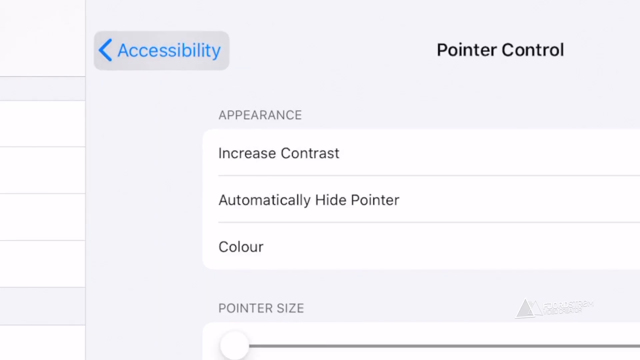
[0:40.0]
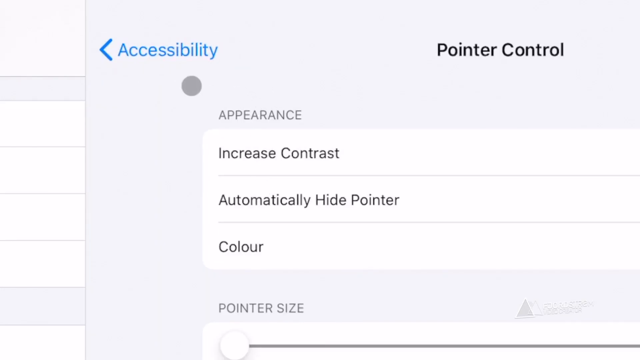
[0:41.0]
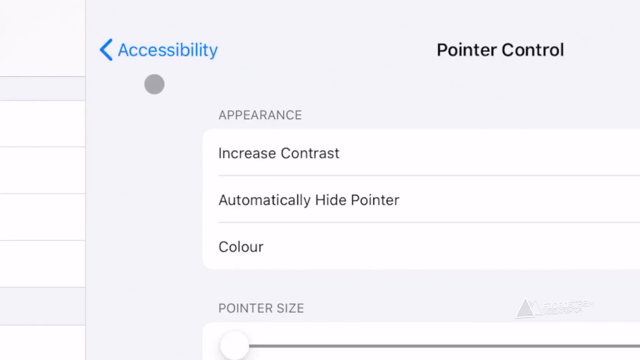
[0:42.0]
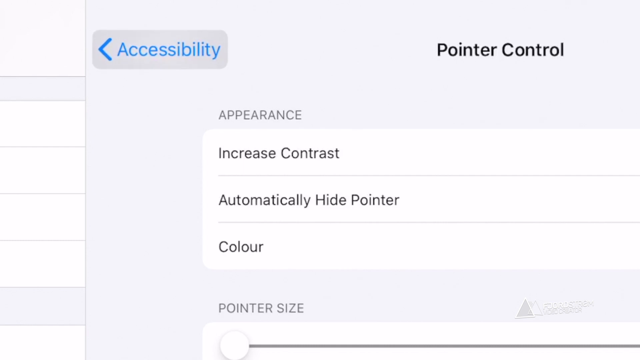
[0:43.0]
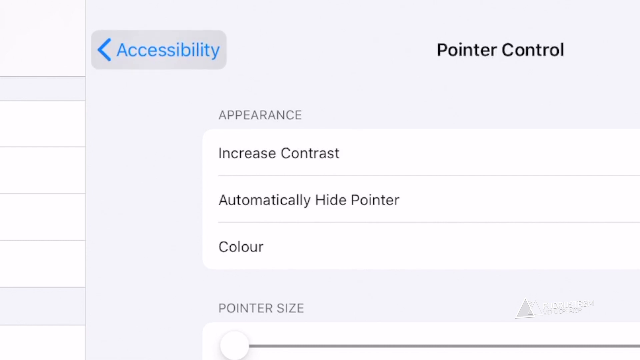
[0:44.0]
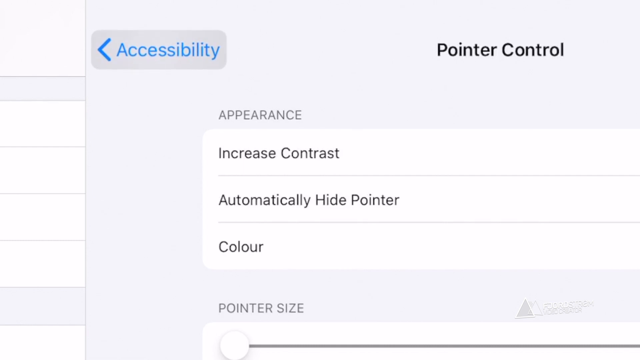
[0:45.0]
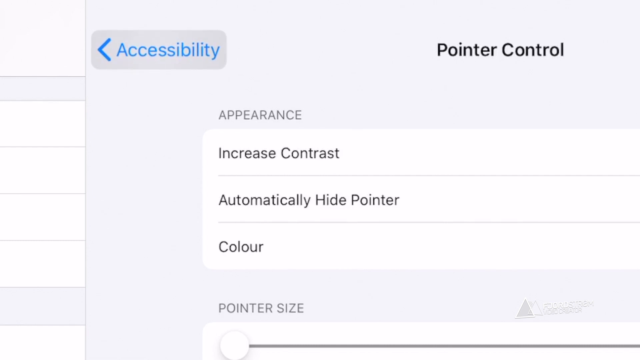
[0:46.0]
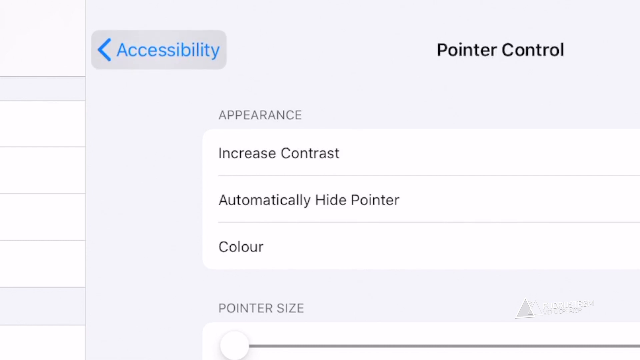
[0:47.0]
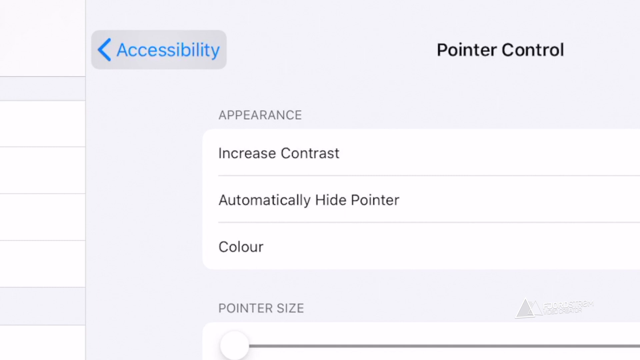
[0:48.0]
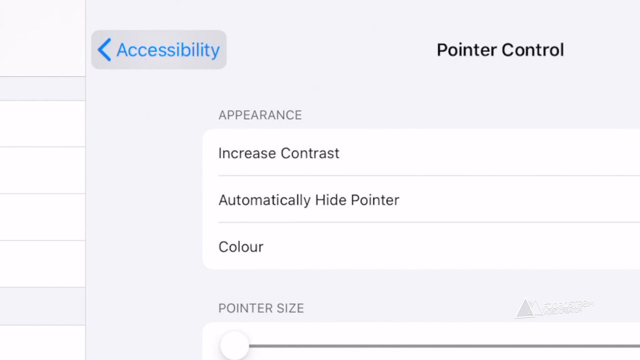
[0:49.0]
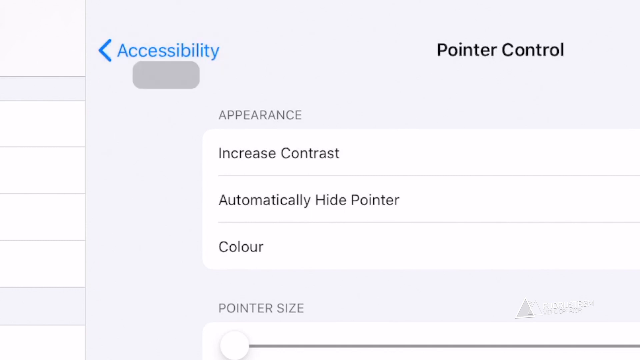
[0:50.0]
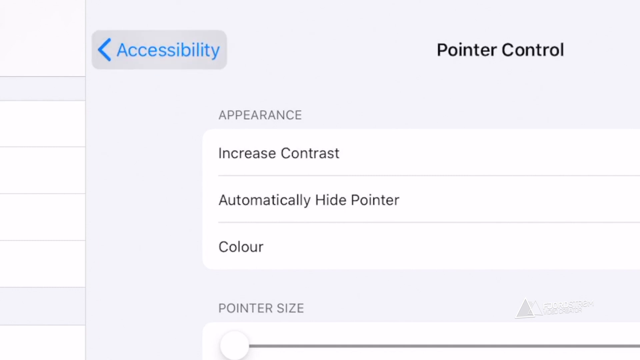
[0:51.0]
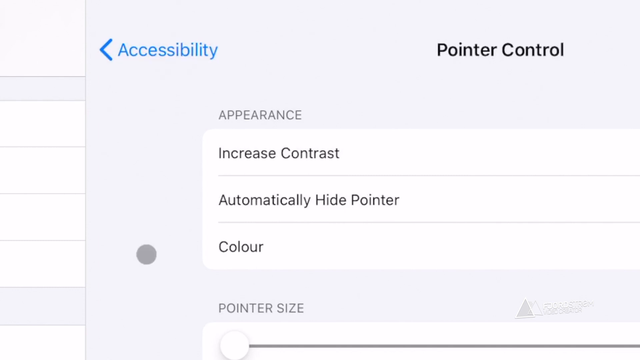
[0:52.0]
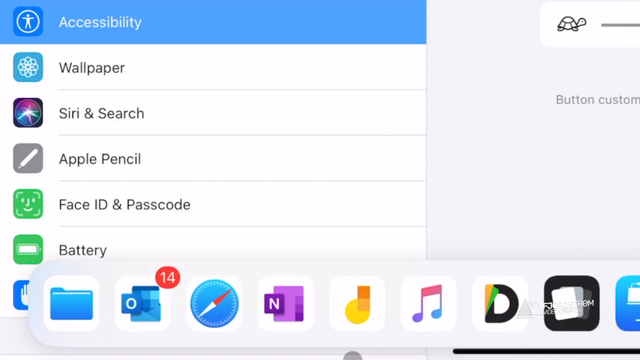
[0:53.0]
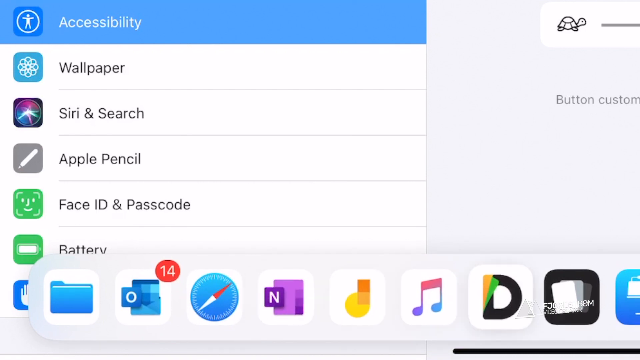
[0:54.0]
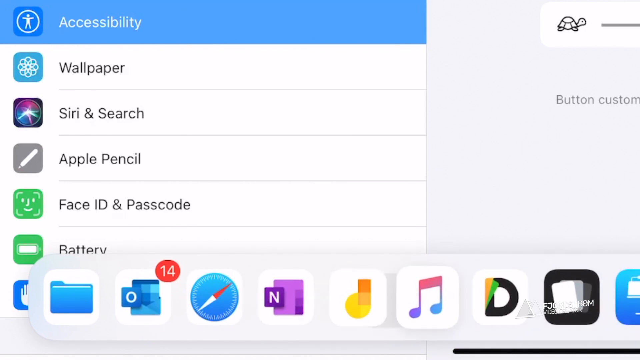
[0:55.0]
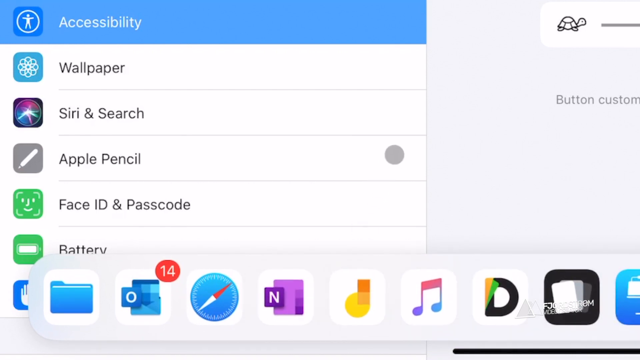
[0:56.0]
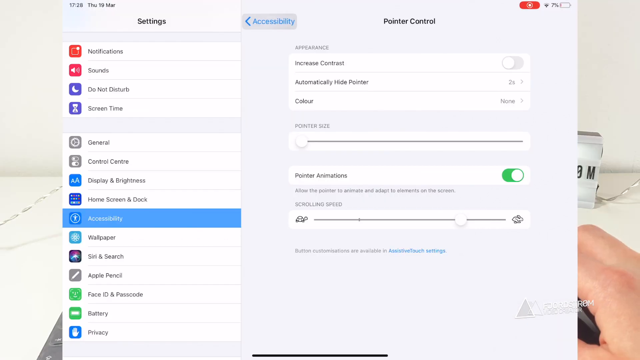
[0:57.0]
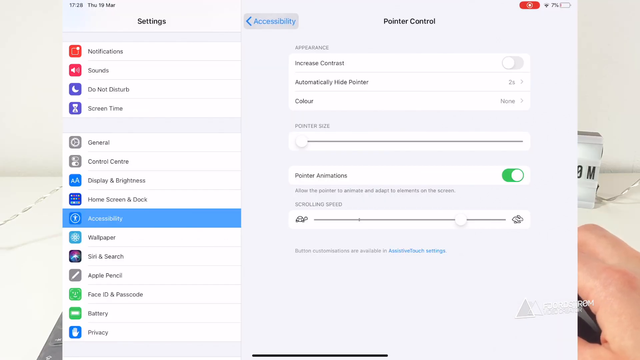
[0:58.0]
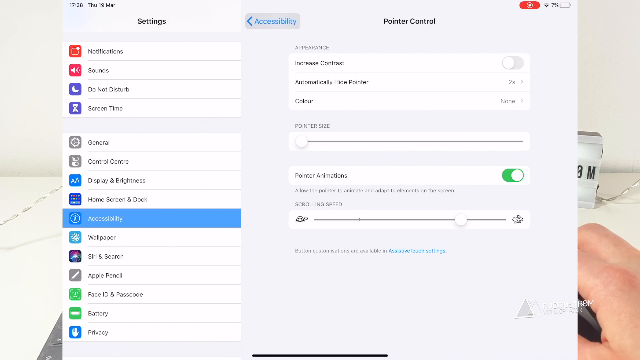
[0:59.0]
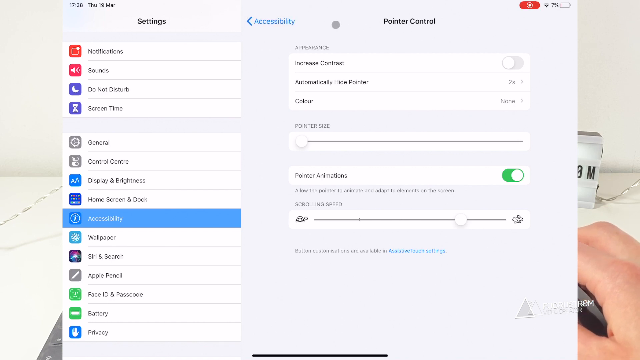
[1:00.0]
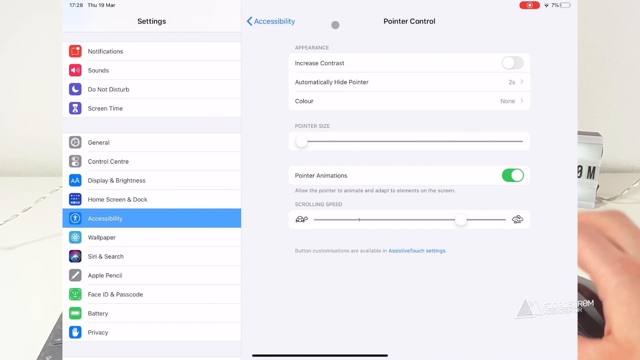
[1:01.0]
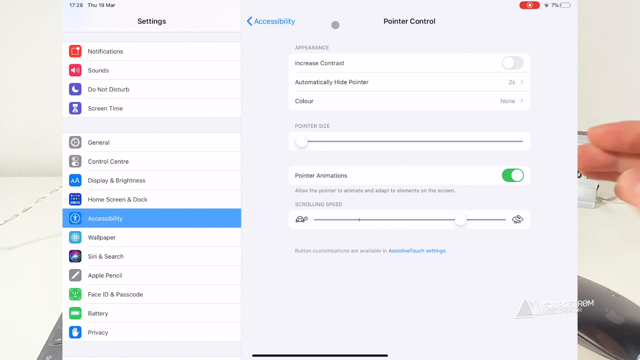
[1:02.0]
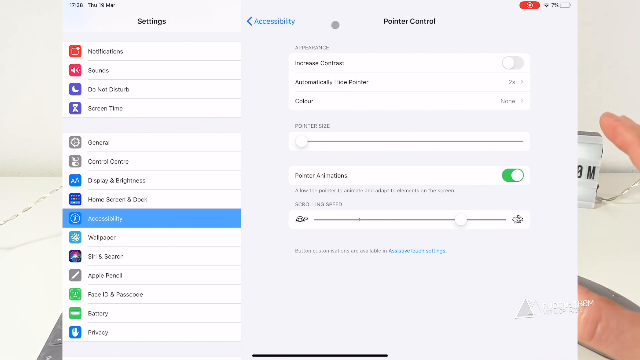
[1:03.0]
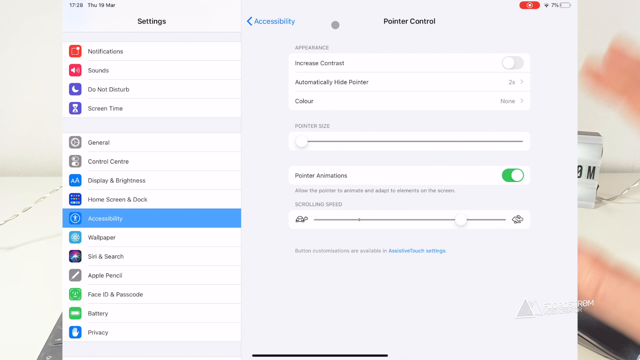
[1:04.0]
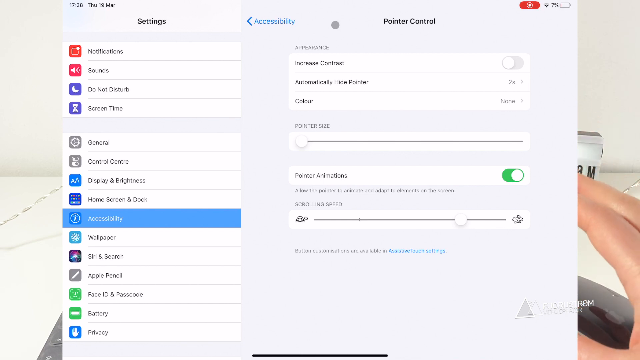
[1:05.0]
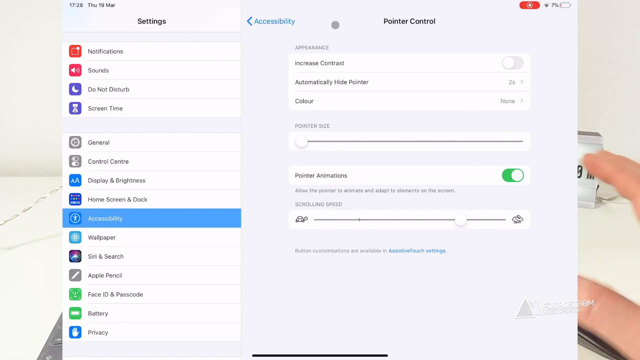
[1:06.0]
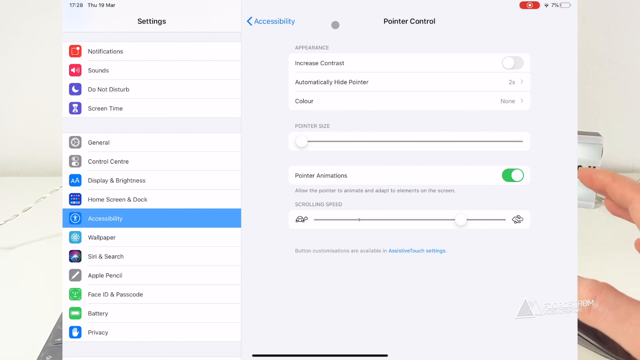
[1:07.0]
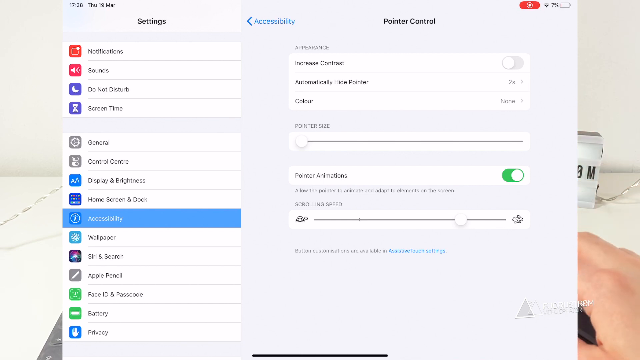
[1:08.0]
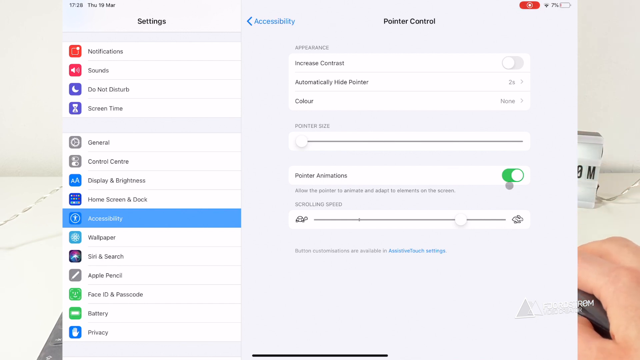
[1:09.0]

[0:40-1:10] A screen shows "Accessibility" in blue text and "Pointer Control" in black text, along with "Appearance," "Increase Contrast," "Automatically Hide Pointer," "Color" and "Pointer Size." He moves his mouse over the Accessibility tab, repeatedly going up and down, then keeps it over that section, which stays on screen for a while as he fiddles with it. The view goes back to the full main settings screen, listing notifications, sounds, do not disturb, screen time, general, control center, display and brightness, home screen and dock, accessibility, wallpaper, Siri and search, Apple Pencil, face ID and passcode, battery and privacy, plus options for pointer size, pointer animations and scrolling speed. He looks over the different apps and icons, and as the pointer passes over them they open slightly and get larger. He then goes back to the Accessibility, Pointer Control page, moves his mouse over Accessibility, stops, and moves his hands around while talking. Finally he moves his mouse down to the section that says "pointer animations."